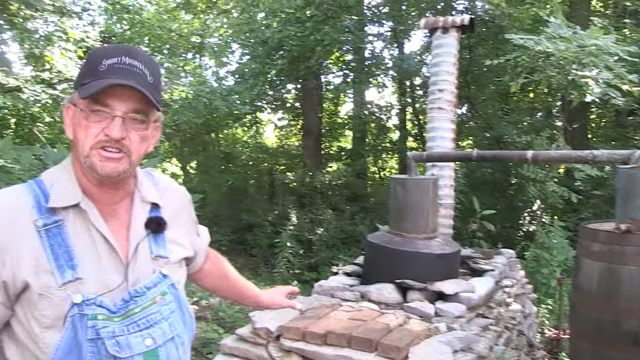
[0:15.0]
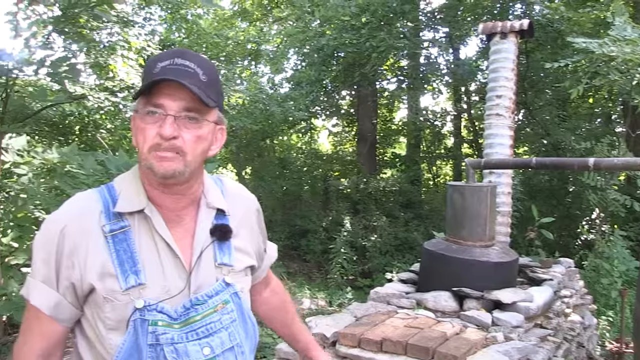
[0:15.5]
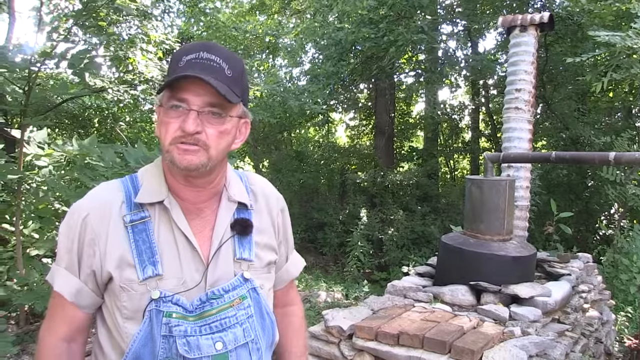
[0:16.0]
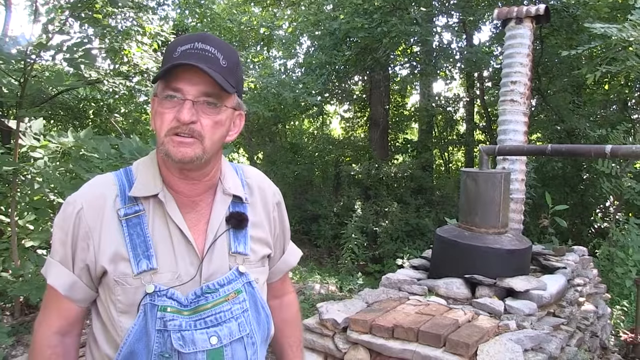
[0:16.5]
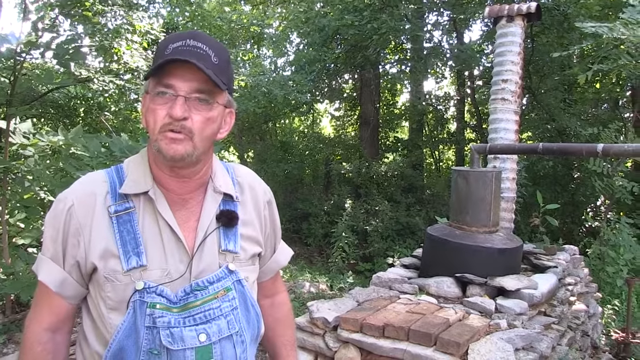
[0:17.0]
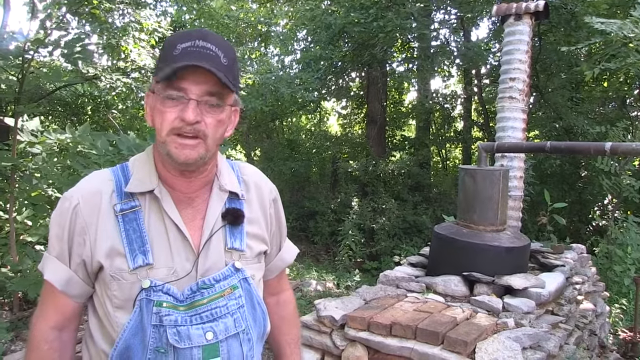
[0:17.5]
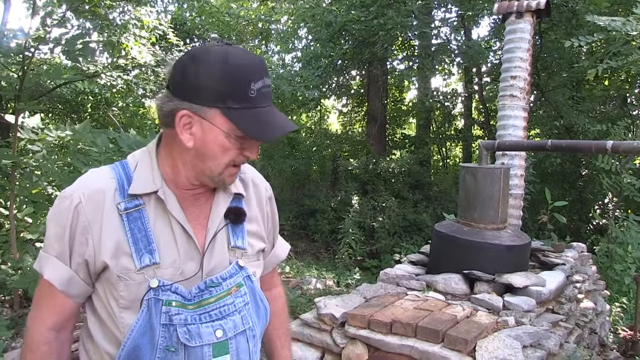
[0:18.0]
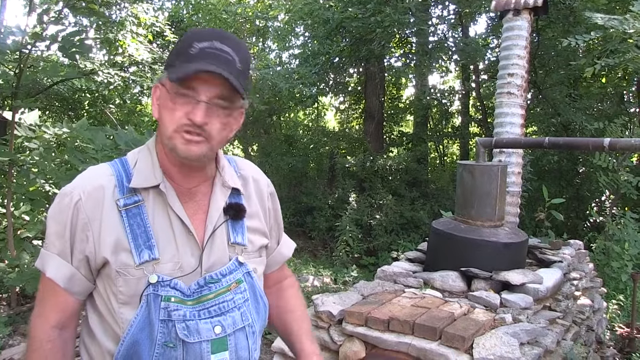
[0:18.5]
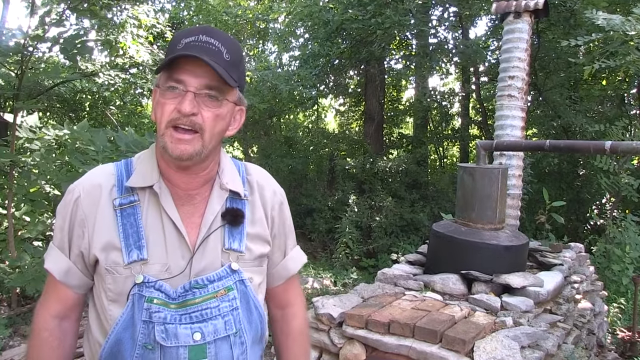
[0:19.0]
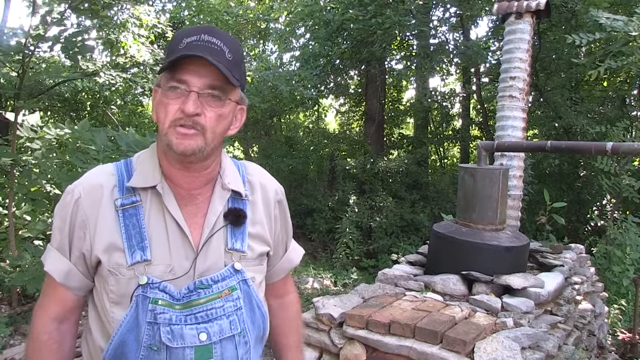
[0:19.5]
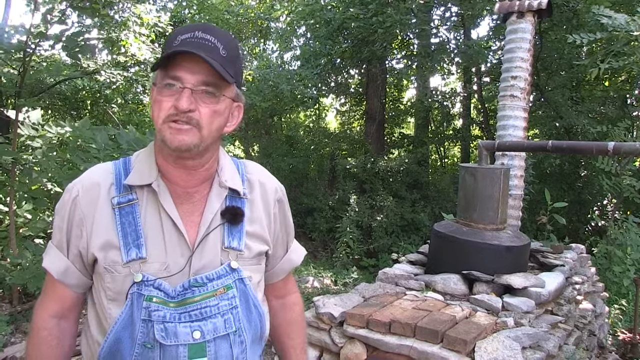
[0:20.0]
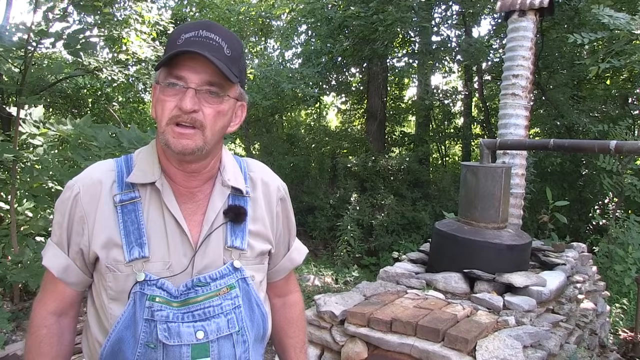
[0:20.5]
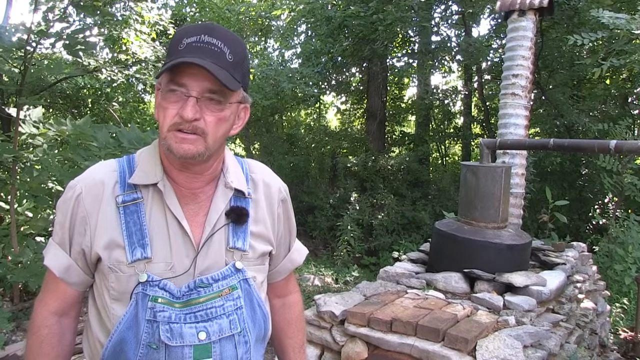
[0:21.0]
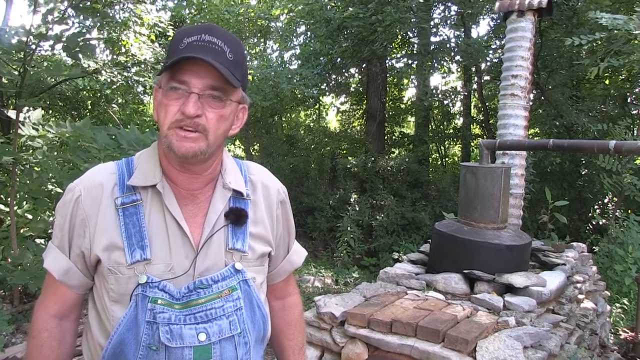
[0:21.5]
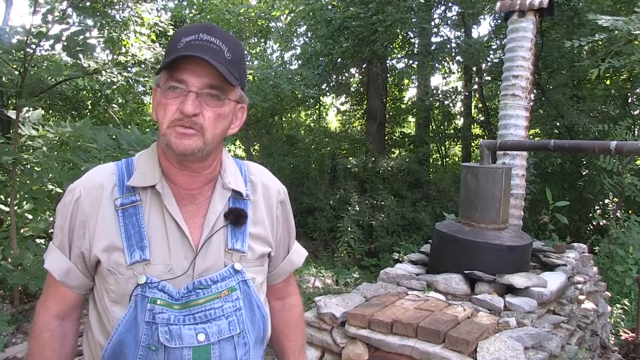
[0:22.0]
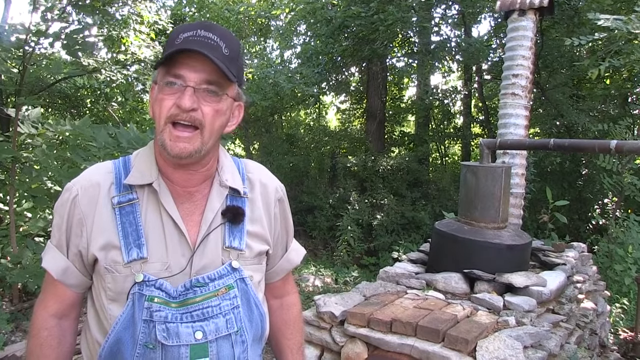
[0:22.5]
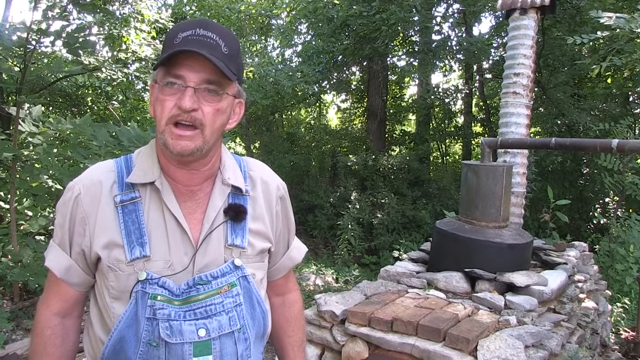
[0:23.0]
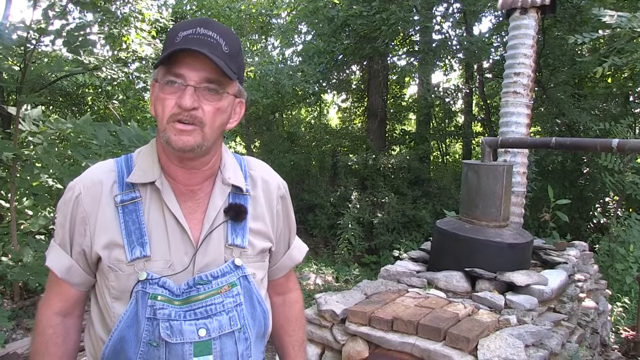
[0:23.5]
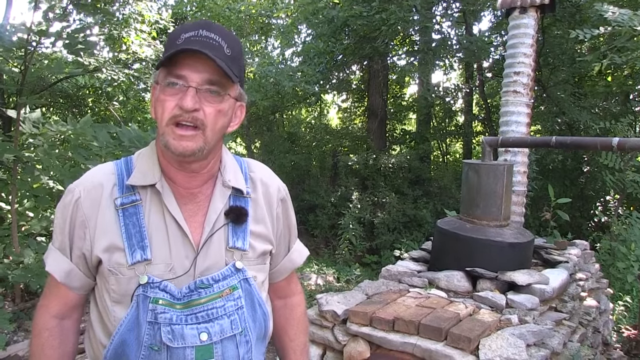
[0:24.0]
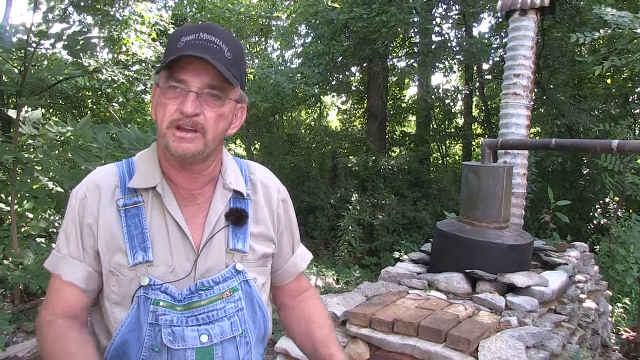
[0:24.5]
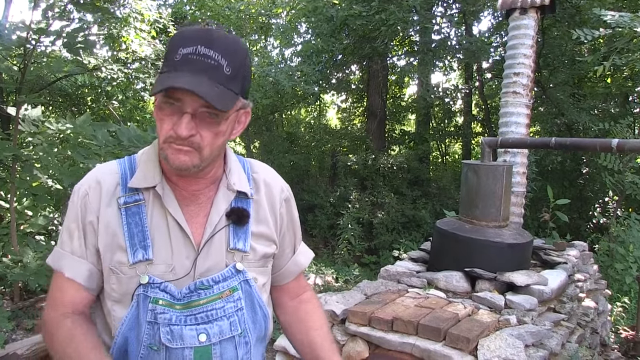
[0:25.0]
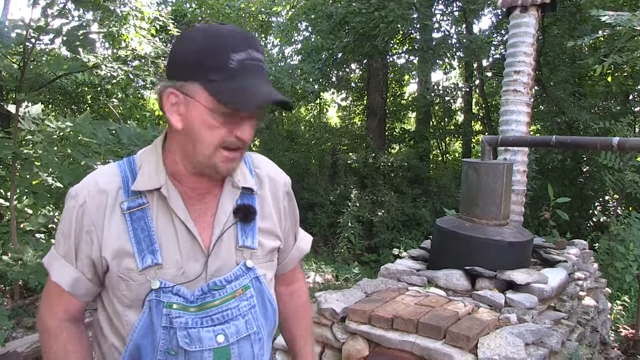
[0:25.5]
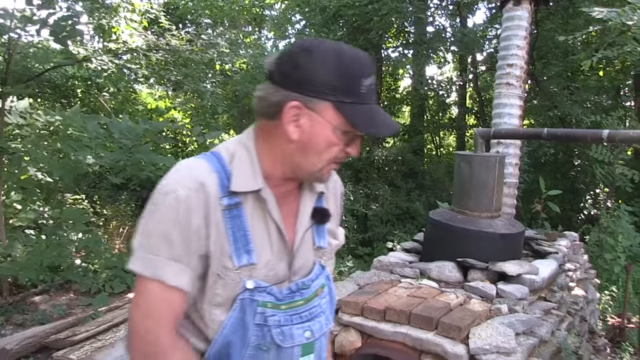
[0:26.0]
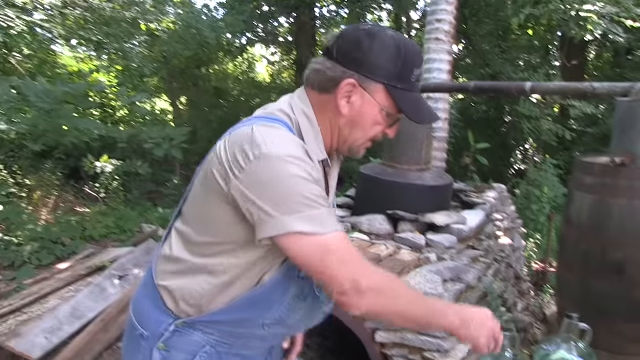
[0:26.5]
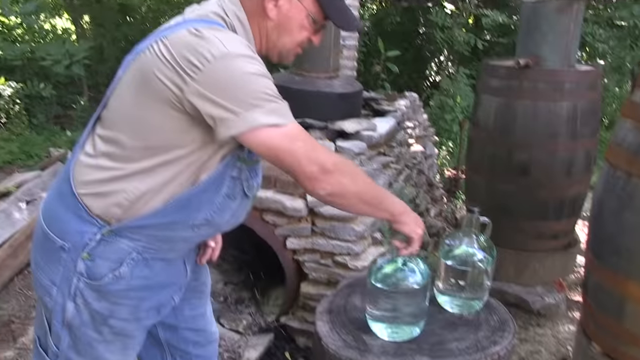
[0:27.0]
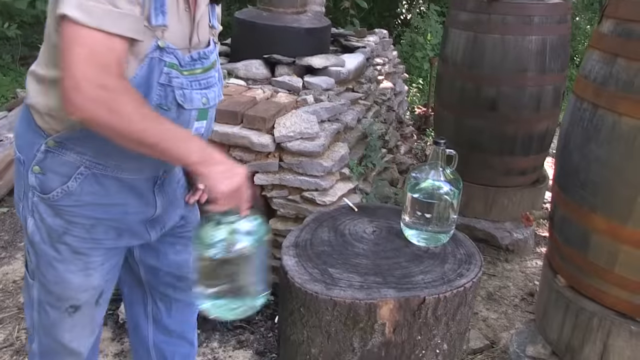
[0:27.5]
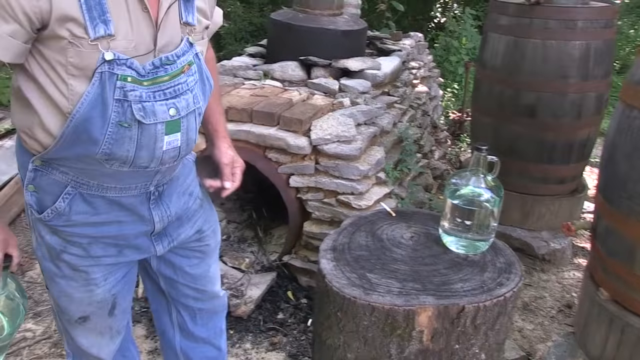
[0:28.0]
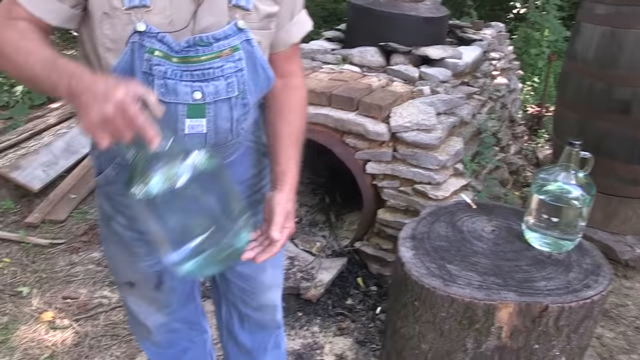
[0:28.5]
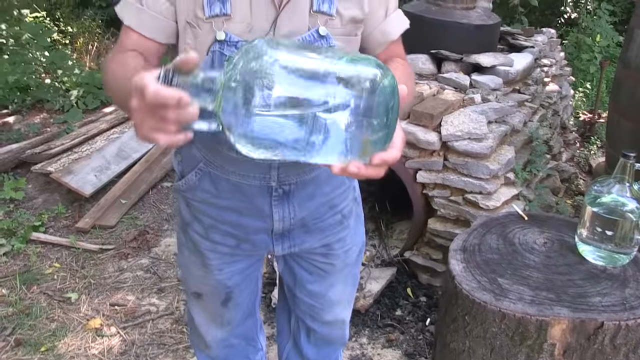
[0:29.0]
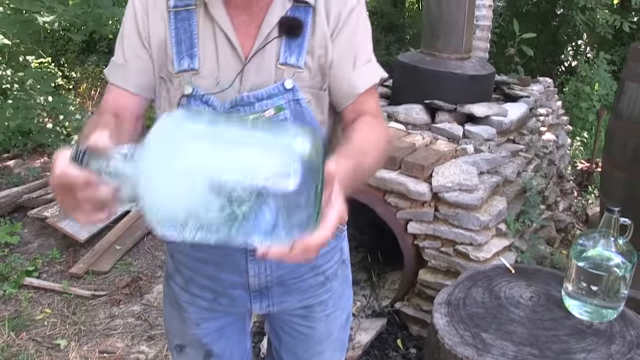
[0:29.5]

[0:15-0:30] The same old man appears to be talking to the person recording as he explains something, presumably about the main subject of the video, which appears to be moonshine, judging by the title. He has containers of apparent moonshine on a small, circular black table. The containers are kind of like water jugs, with a small cylinder at the top and a bottle cap with a small handle. He grabs one from under the handle and shakes it out from the side.